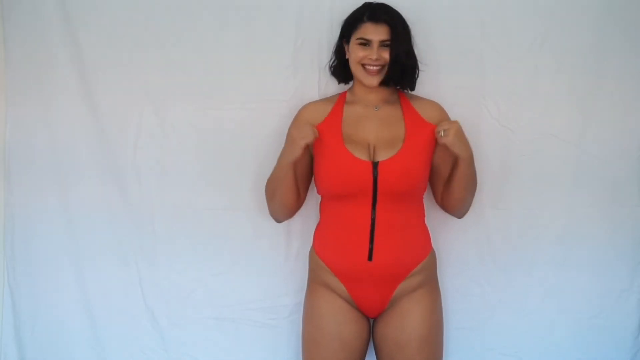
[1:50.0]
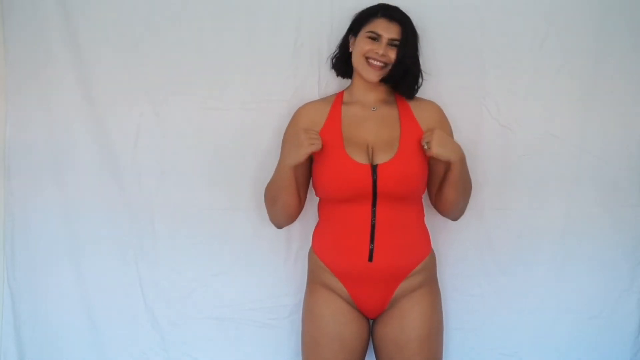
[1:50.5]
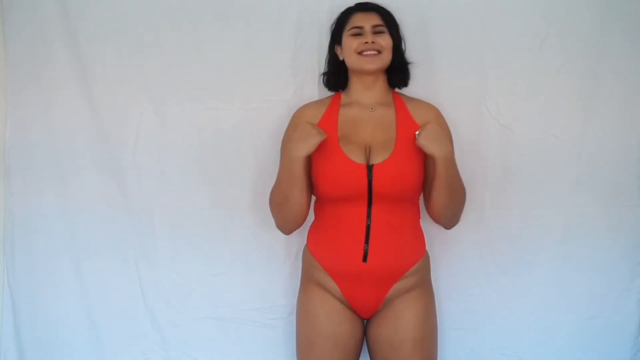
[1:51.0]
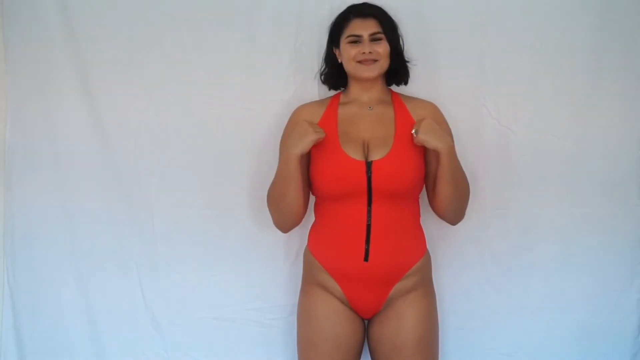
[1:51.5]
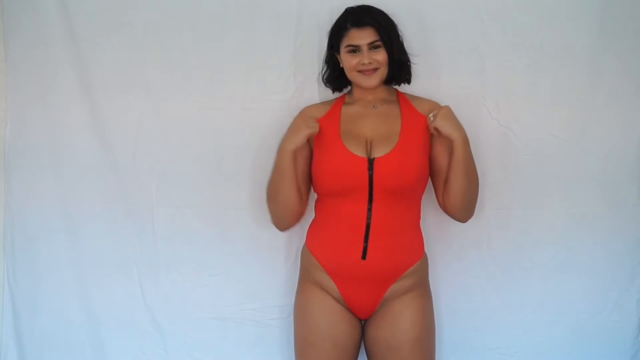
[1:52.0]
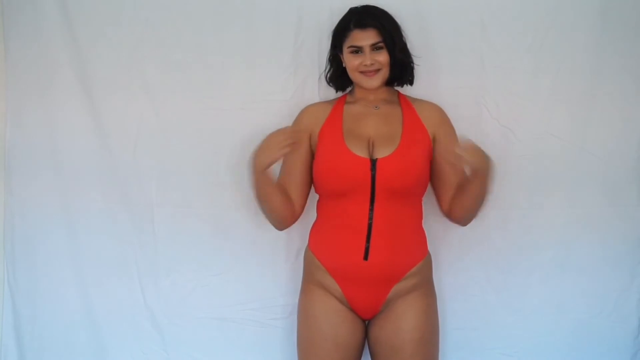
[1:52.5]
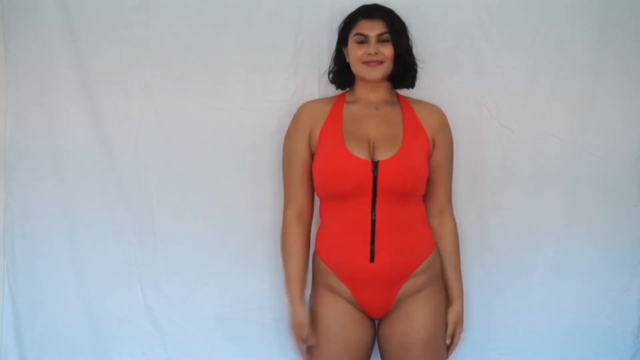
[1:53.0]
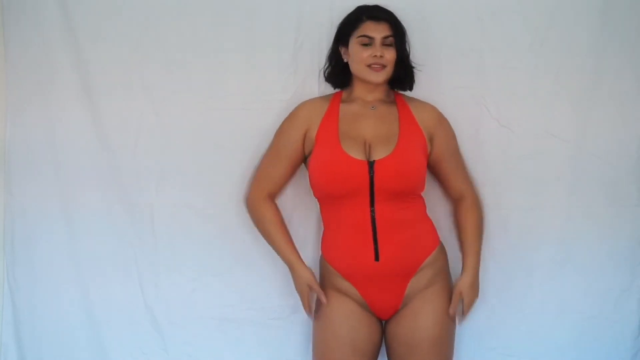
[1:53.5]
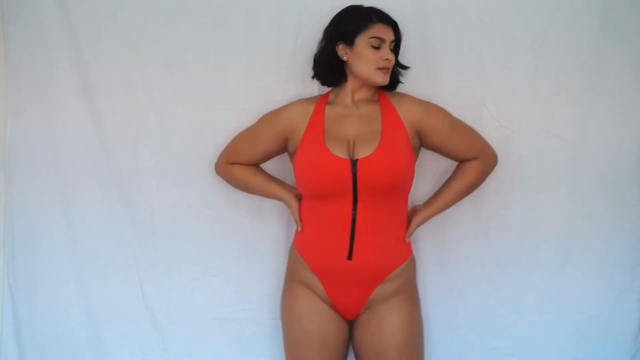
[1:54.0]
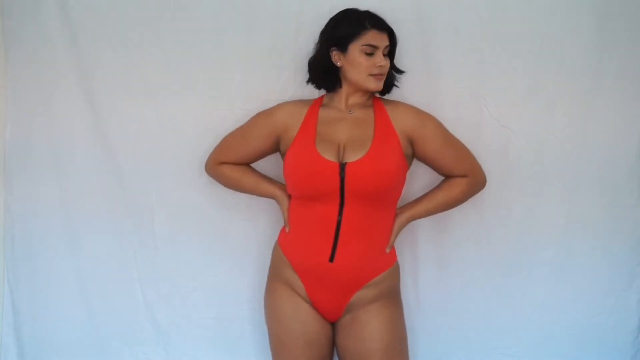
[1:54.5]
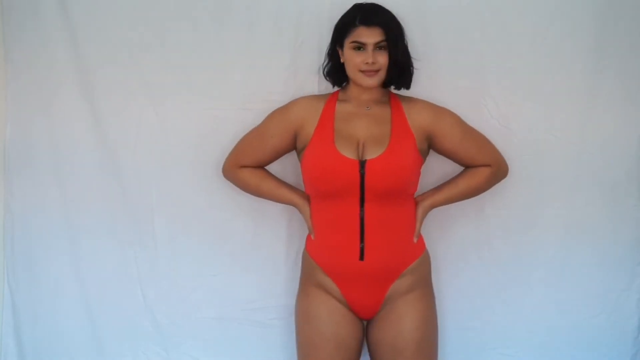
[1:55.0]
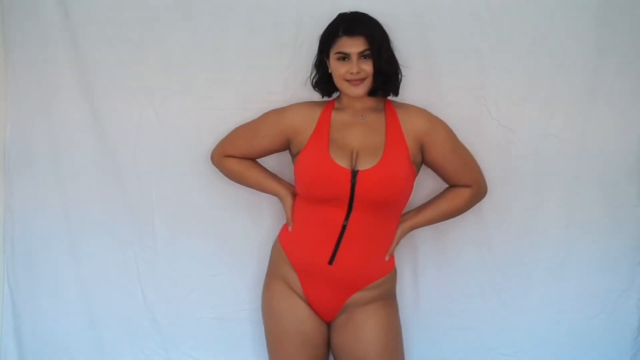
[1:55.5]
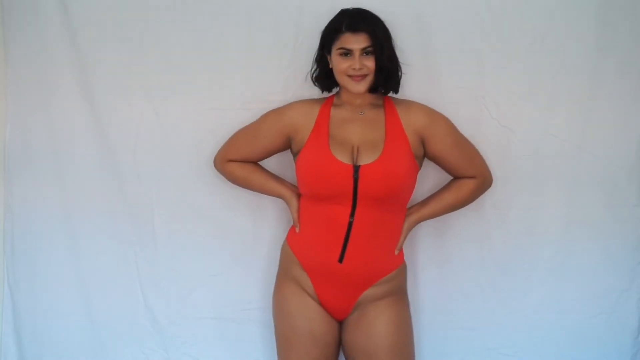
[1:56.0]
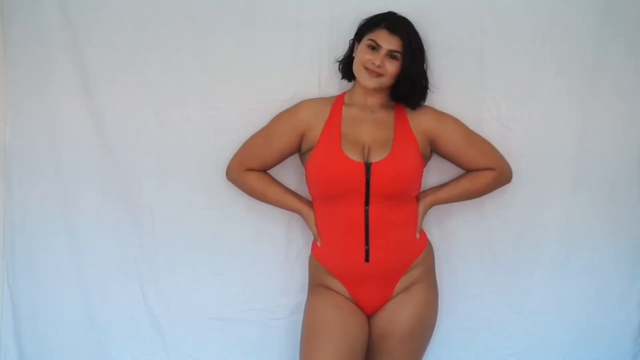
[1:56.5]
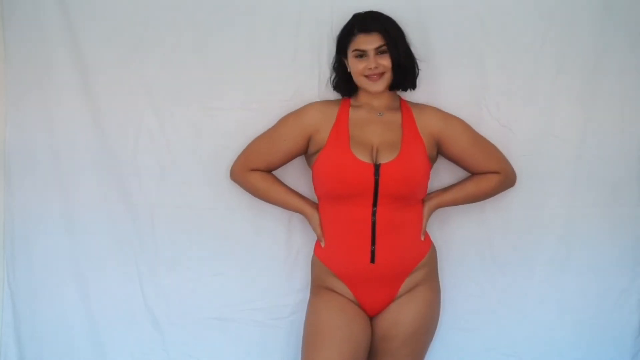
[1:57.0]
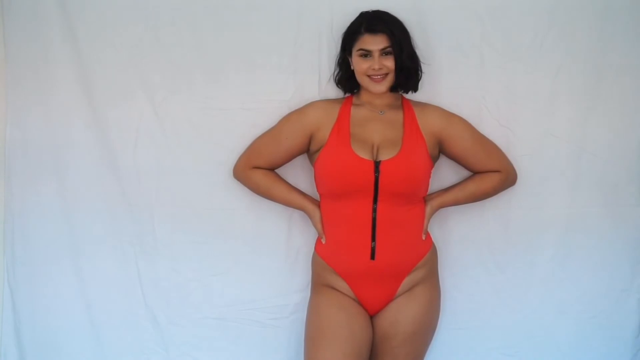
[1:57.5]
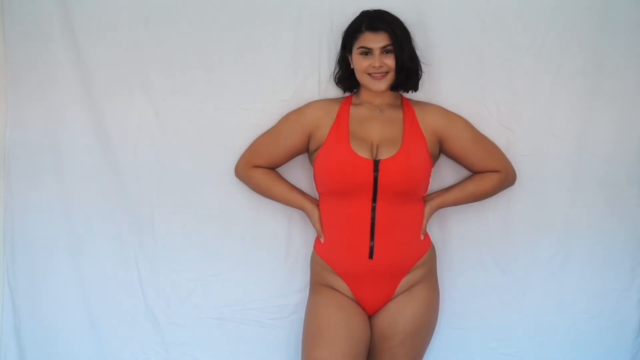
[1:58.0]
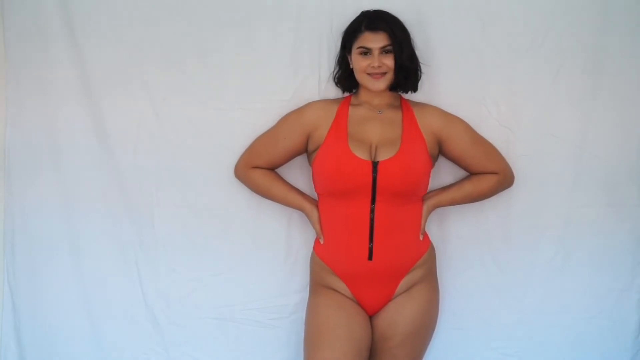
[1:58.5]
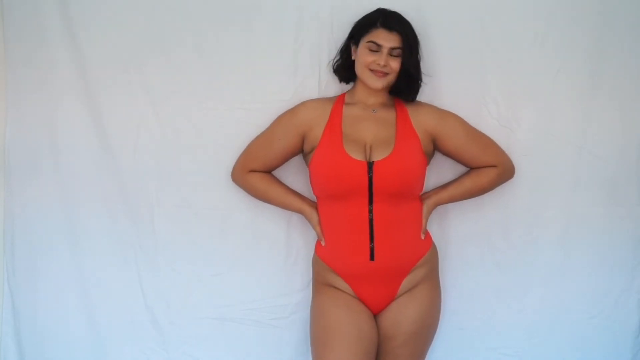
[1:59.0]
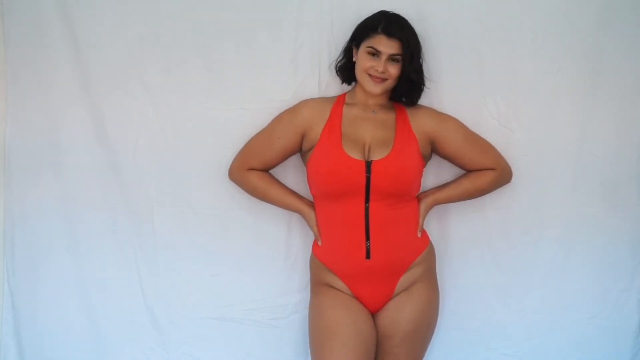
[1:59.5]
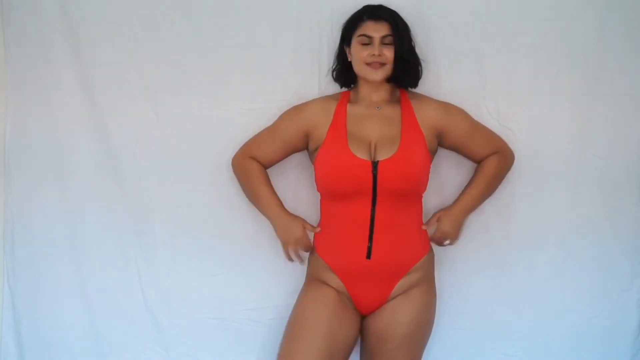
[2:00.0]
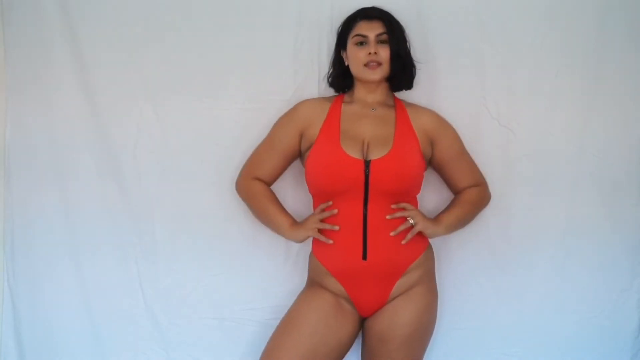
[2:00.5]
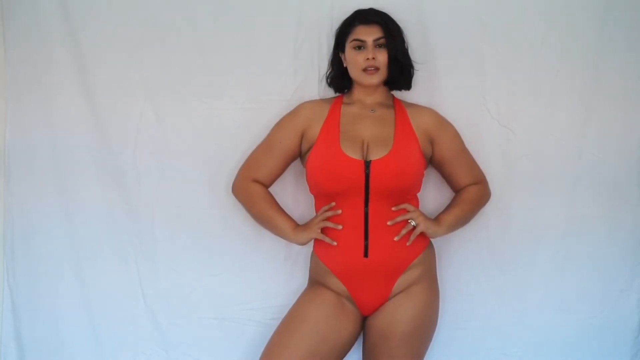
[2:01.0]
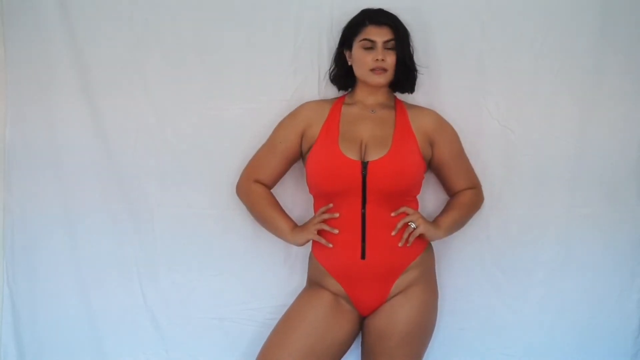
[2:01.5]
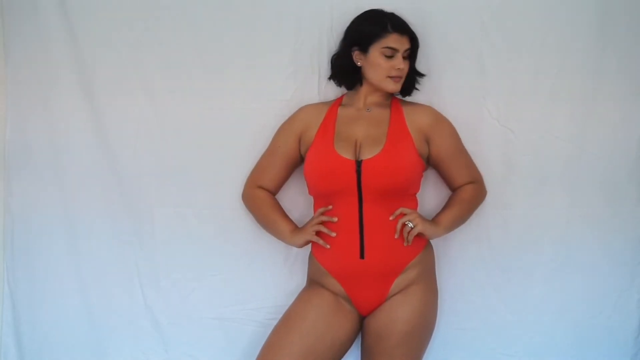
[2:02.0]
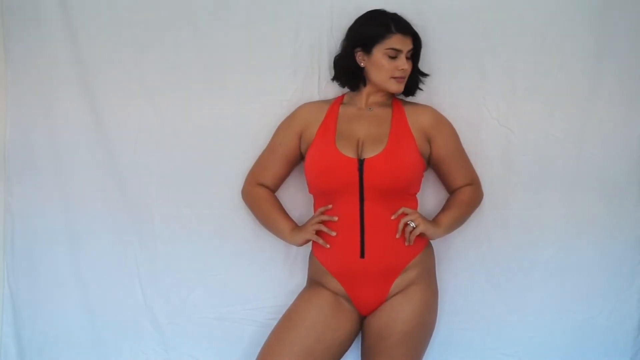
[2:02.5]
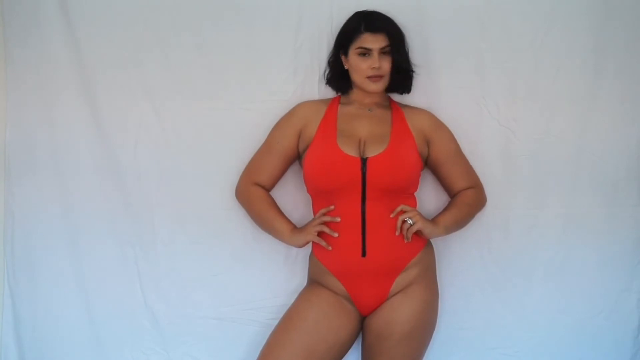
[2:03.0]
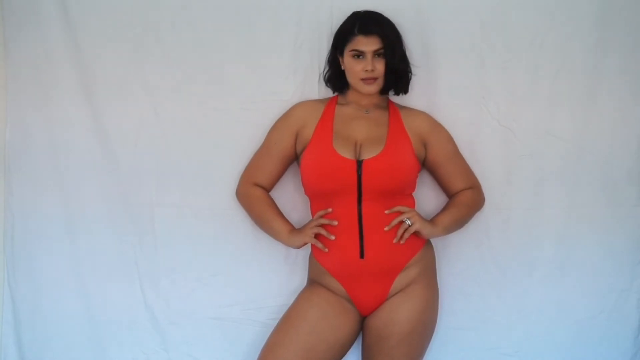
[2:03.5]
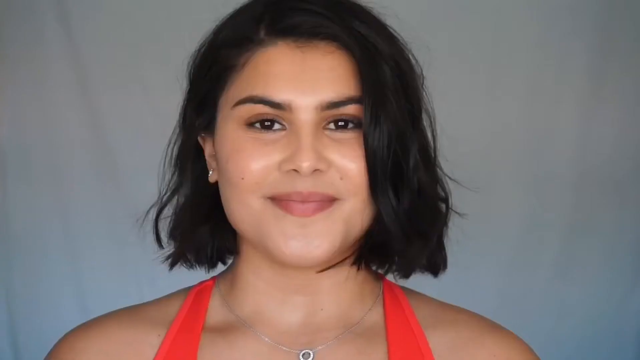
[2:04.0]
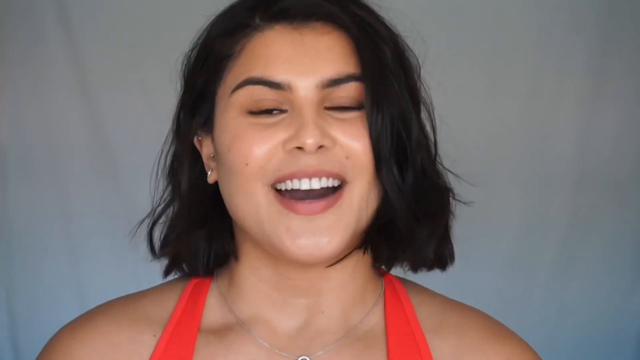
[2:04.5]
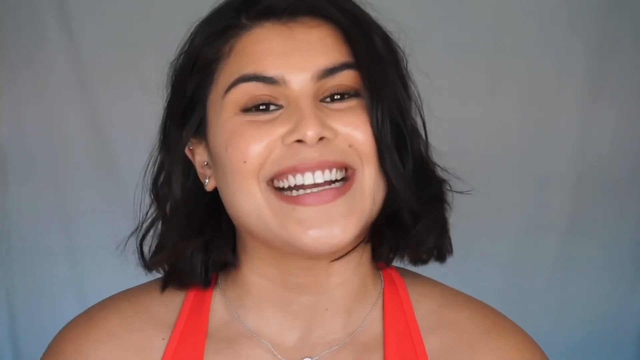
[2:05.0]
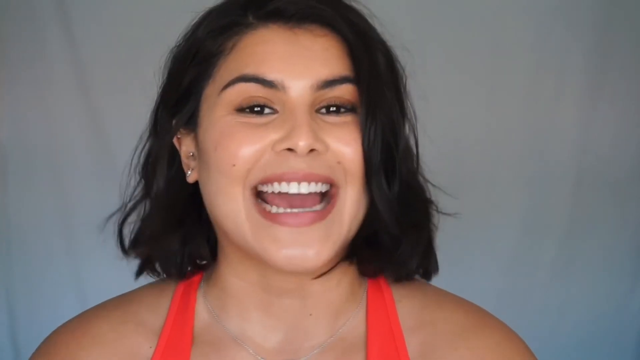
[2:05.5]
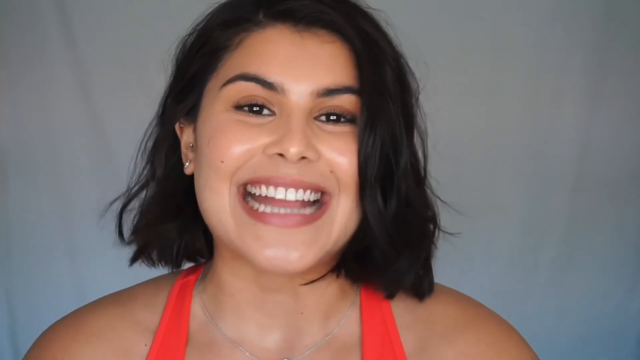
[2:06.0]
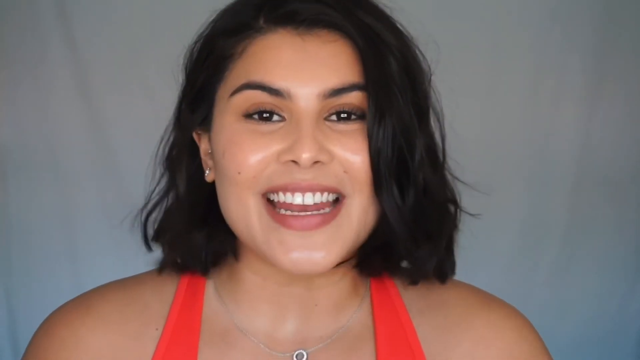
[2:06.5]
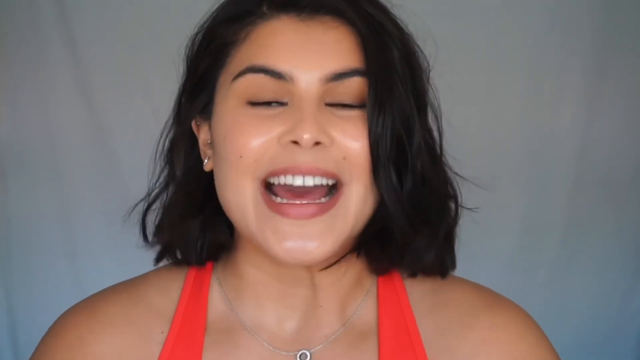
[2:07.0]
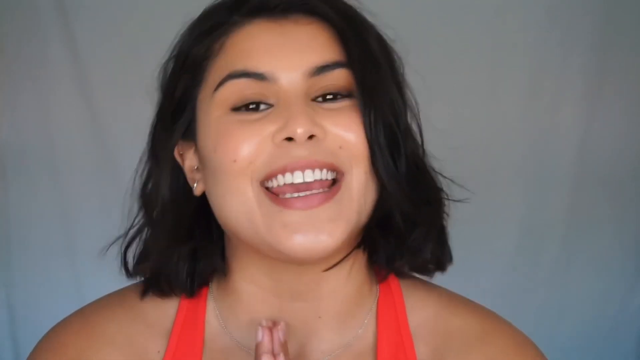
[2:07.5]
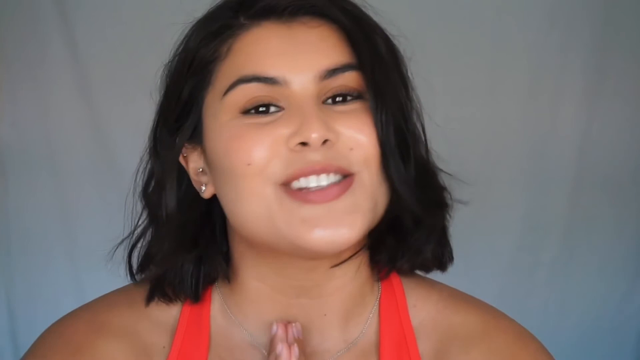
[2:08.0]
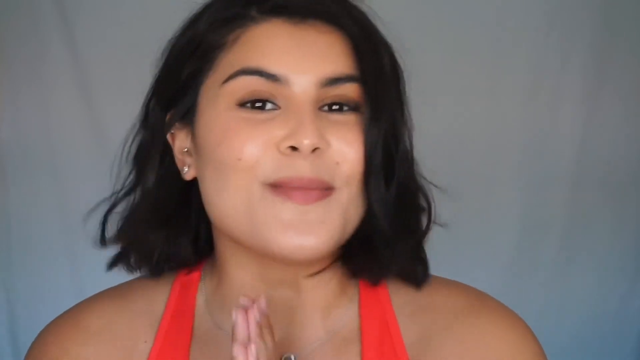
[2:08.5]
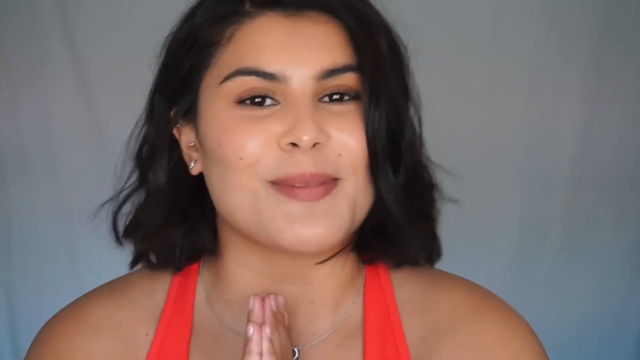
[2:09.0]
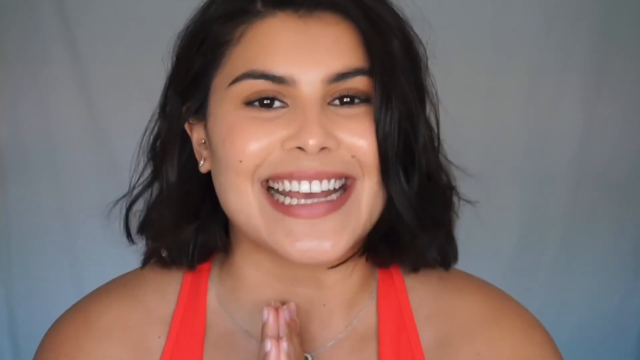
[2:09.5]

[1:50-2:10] The woman continues to model the orange bathing suit with a black zip down the middle. She starts with her hands on the straps at the top of the costume, pulling them slightly to show the tightness, then puts both hands on her hips and looks down toward the right corner of the frame. She shifts her weight from leg to leg and turns her head to smile at the camera again. A jump cut leads to an almost identical pose; she tilts her head slightly and smiles, moves her hands slightly forward on her hips, raising them toward her waist, looks down into the right corner of the frame again and returns her gaze to the camera. The video then cuts to an extreme close-up like the earlier one, once again showing just her head and the very tops of her shoulders; she is clearly still wearing the orange bathing suit. She smiles very broadly as she continues to speak to the camera and holds her hands in a praying position against her chest, with only the very tips of her middle fingers visible. It looks as if she is saying thank you, either to the viewers or perhaps to the person who designed the bathing suit.